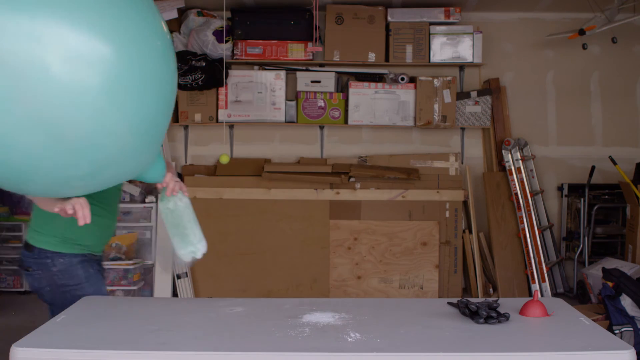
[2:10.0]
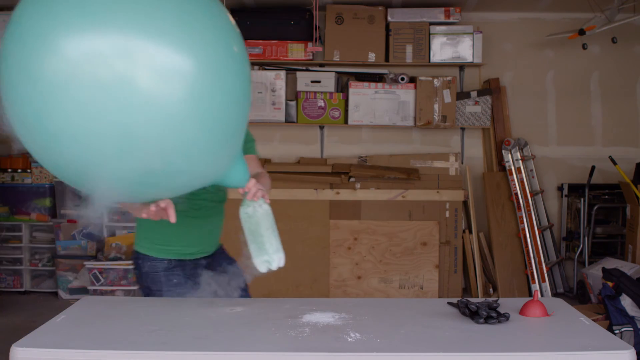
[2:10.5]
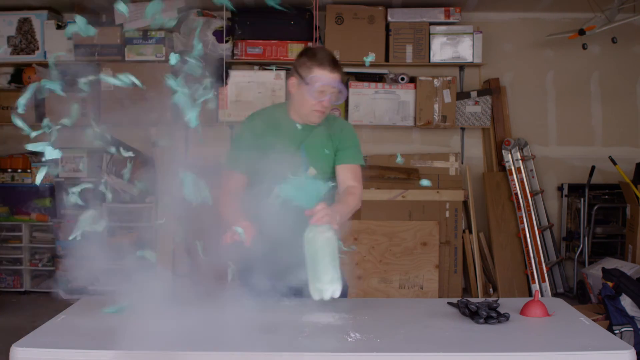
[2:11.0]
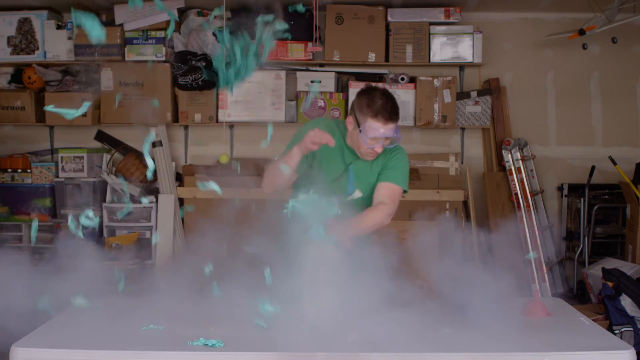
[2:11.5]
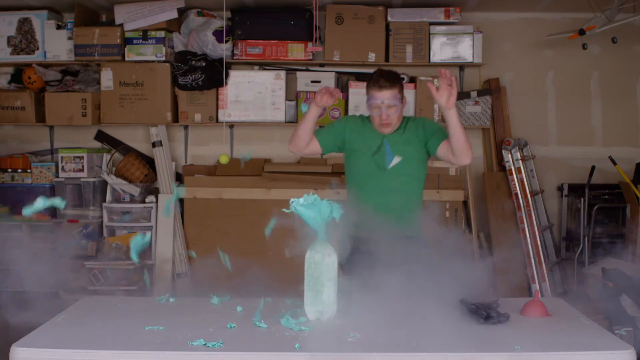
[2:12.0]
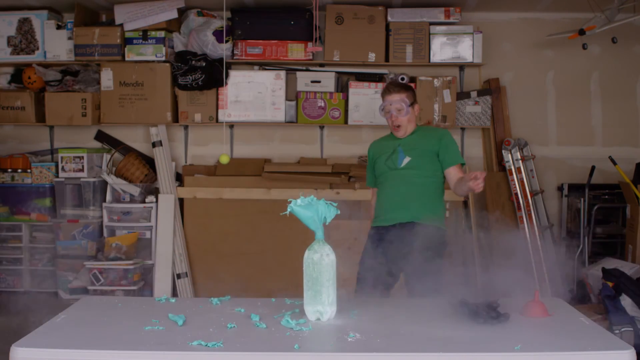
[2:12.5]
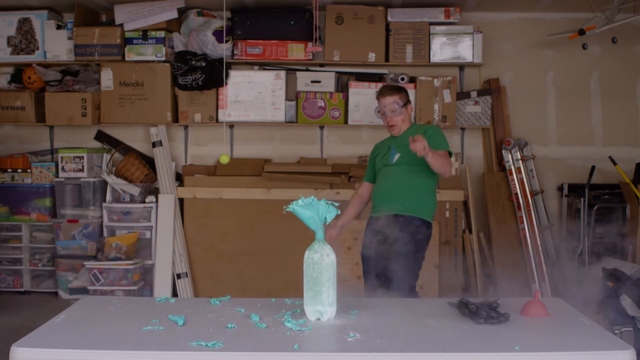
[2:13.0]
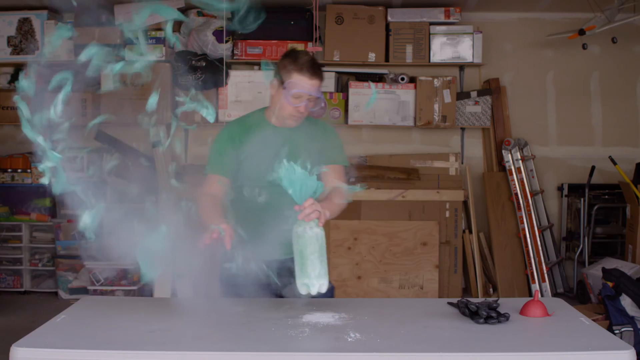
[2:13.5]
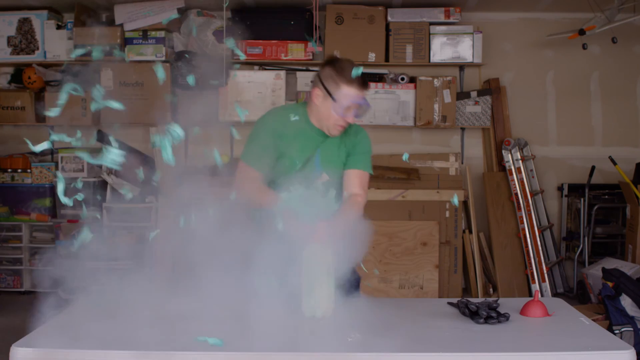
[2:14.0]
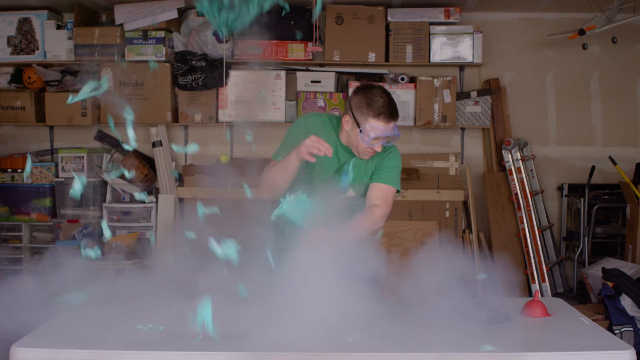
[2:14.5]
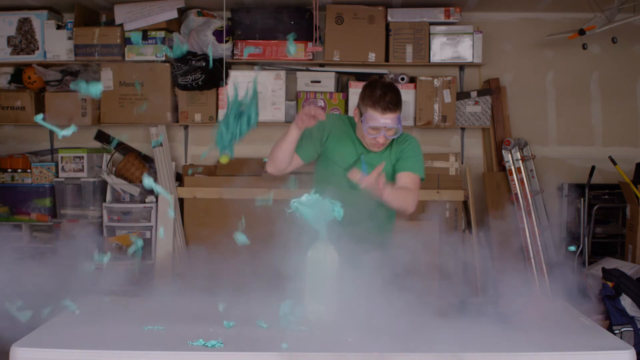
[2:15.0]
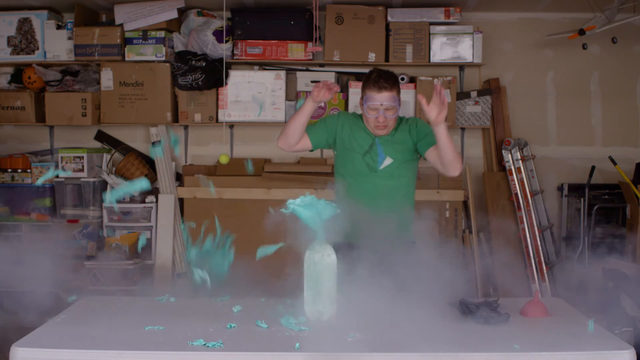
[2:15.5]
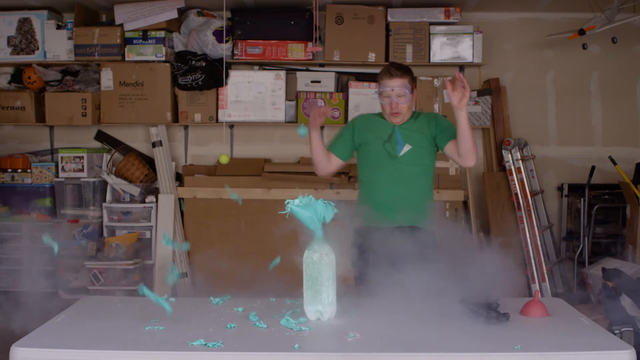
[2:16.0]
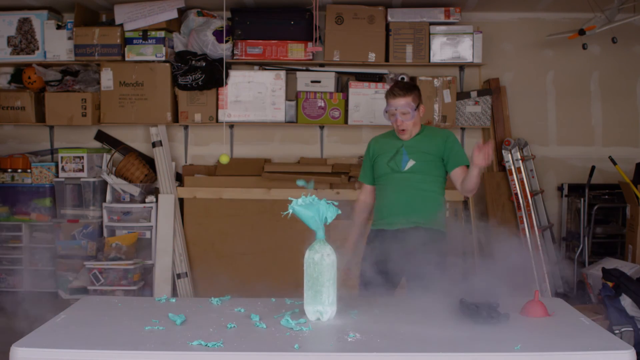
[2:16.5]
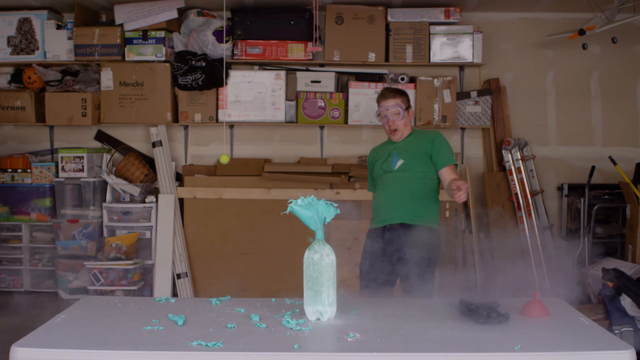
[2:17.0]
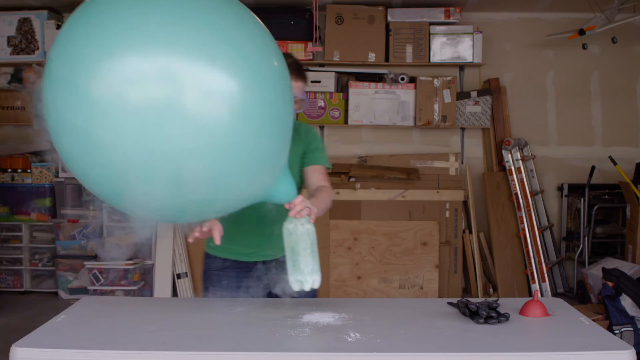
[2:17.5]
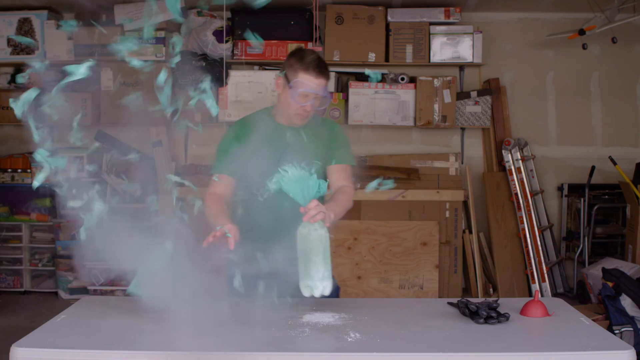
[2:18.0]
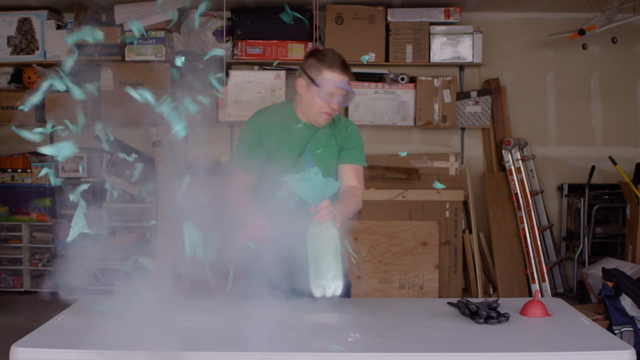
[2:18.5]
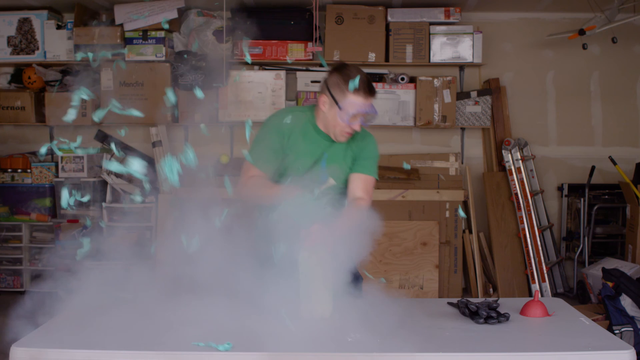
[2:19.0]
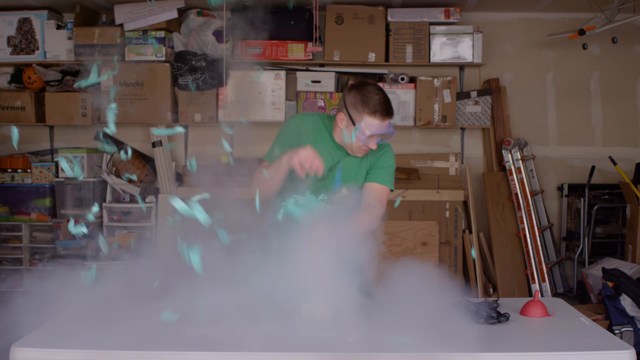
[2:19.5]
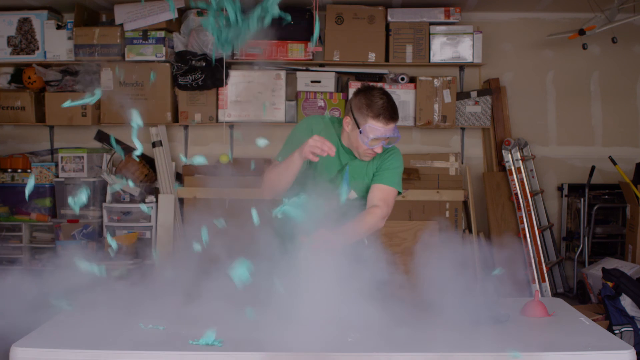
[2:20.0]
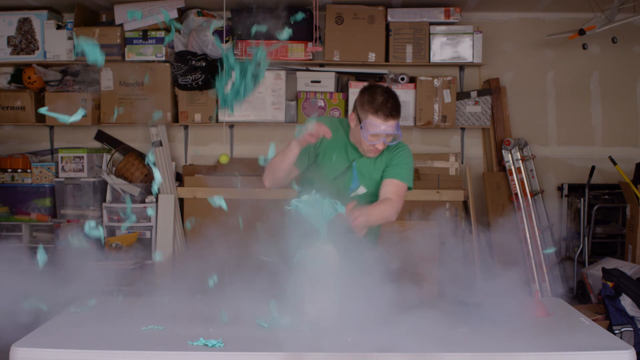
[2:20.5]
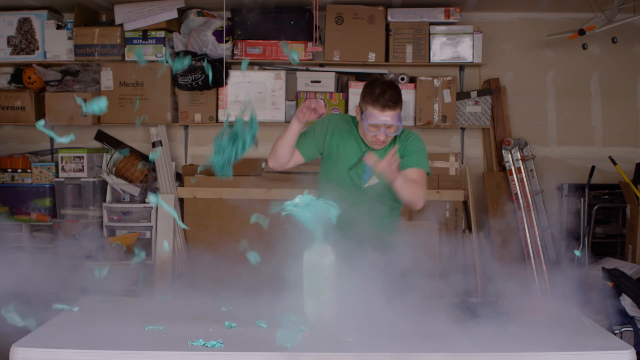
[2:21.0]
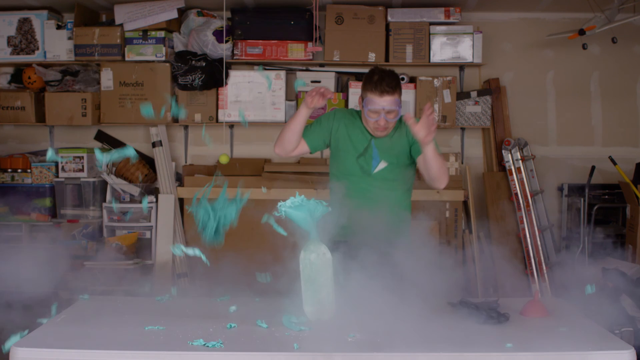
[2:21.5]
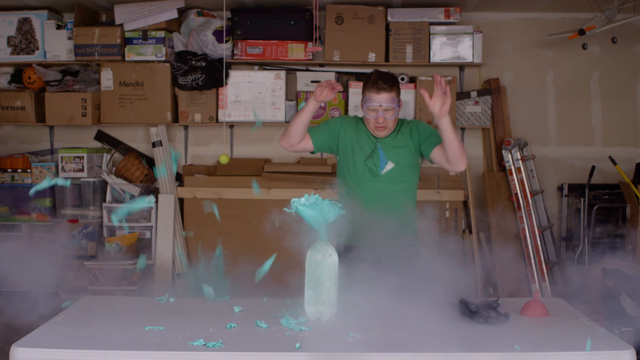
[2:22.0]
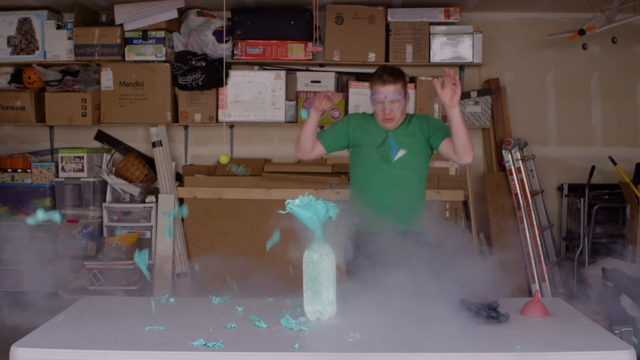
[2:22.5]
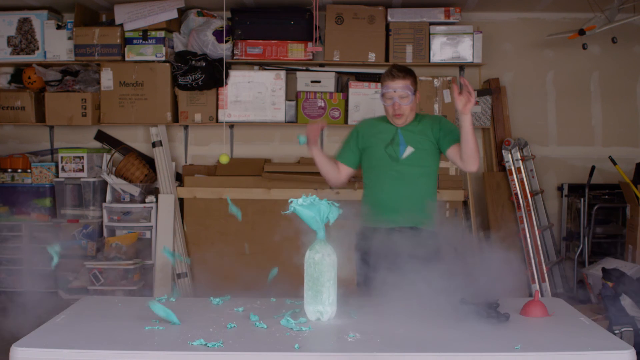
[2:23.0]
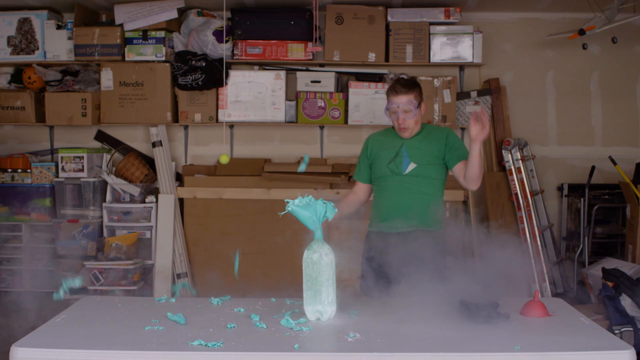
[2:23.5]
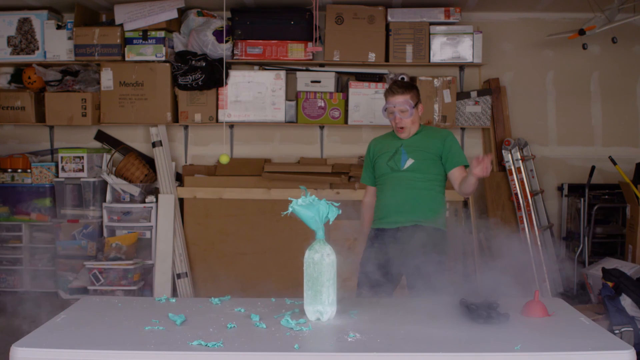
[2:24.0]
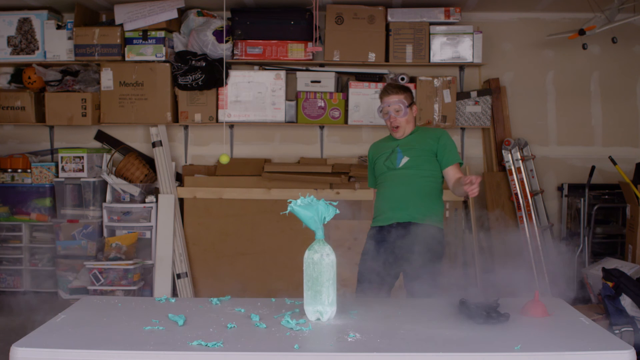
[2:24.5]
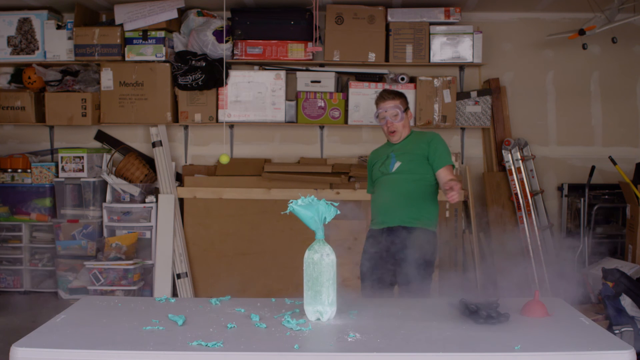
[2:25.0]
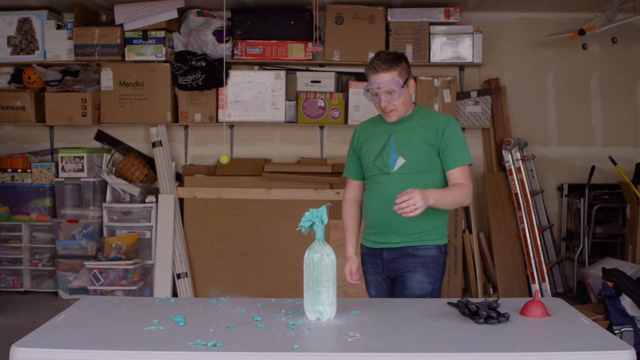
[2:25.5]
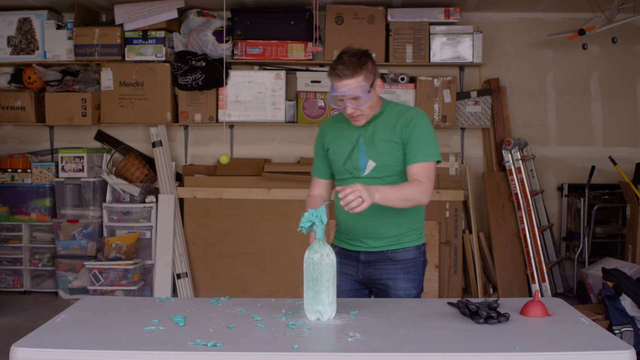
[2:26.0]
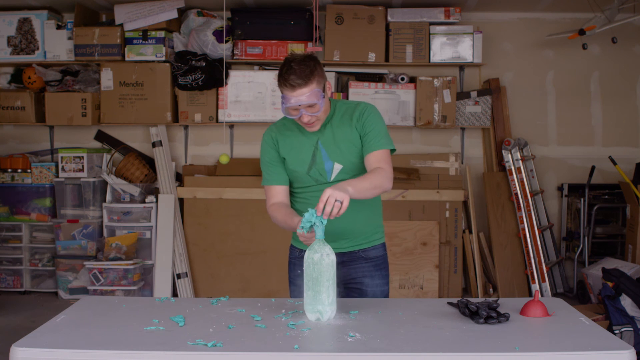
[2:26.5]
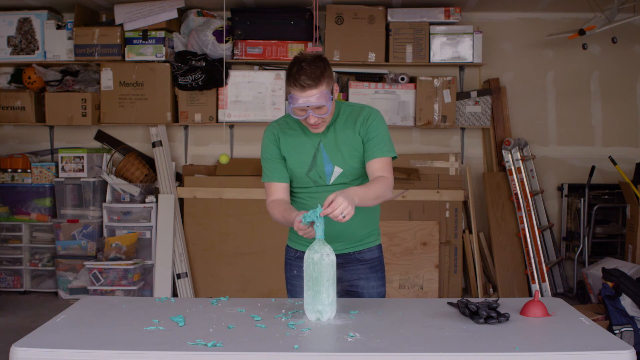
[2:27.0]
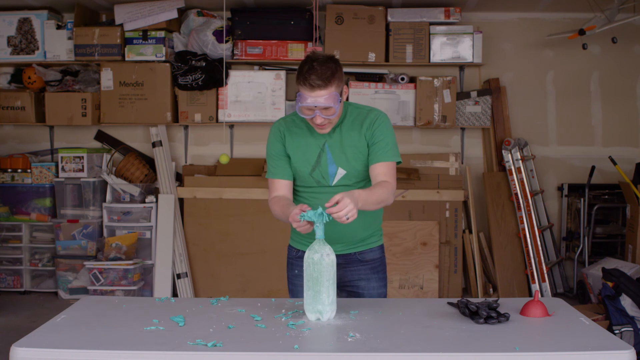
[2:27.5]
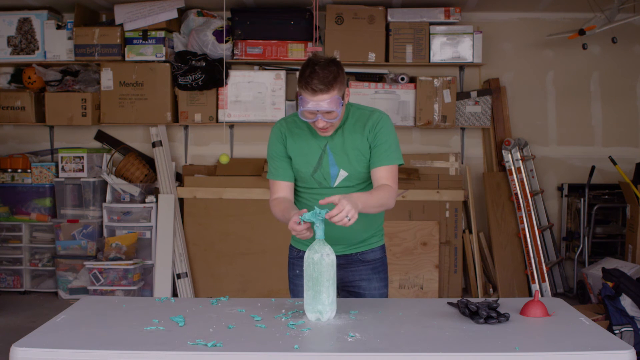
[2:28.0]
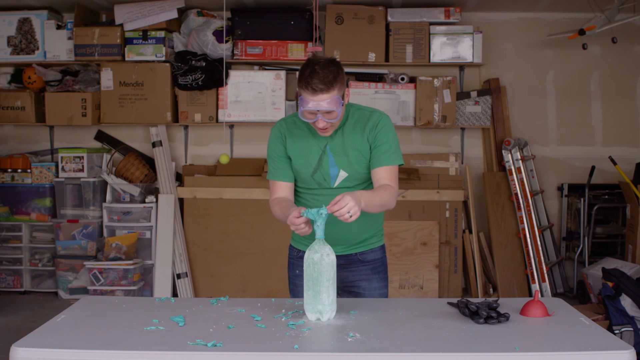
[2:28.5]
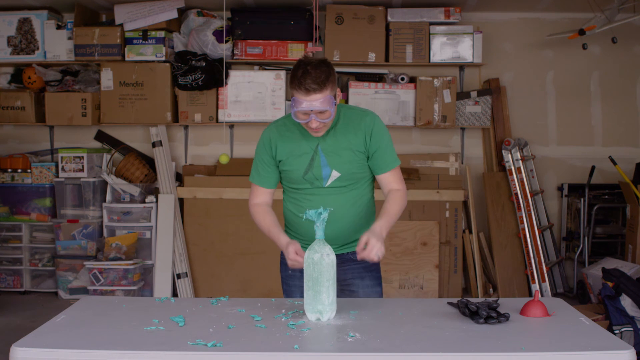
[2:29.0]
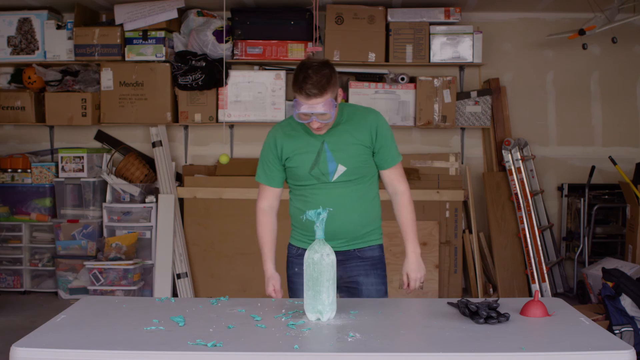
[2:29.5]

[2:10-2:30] An explosion occurs as the green balloon bursts, while the empty green bottle remains intact and stationary on the table. In the right part of the screen is the red funnel, with black areas on the table right next to it at the end. In the background, cardboard boxes on shelves are filled with various items; not all are brown, some are white, some red and some green.